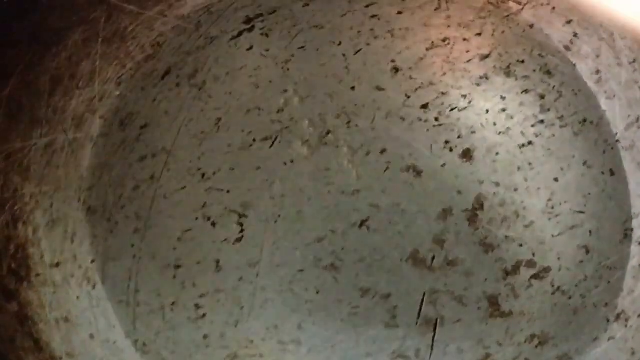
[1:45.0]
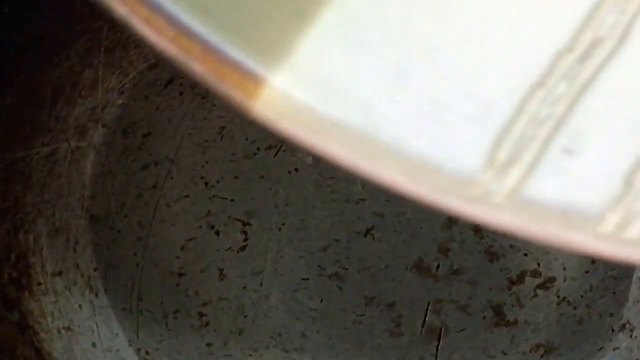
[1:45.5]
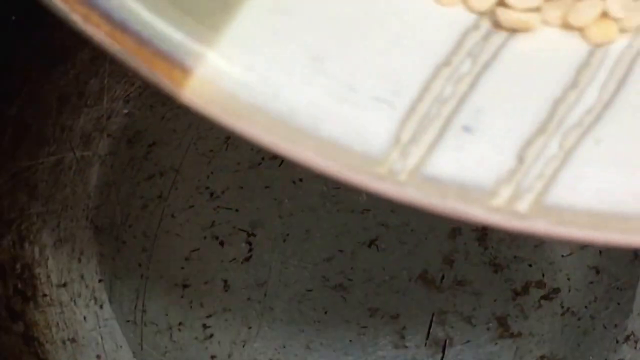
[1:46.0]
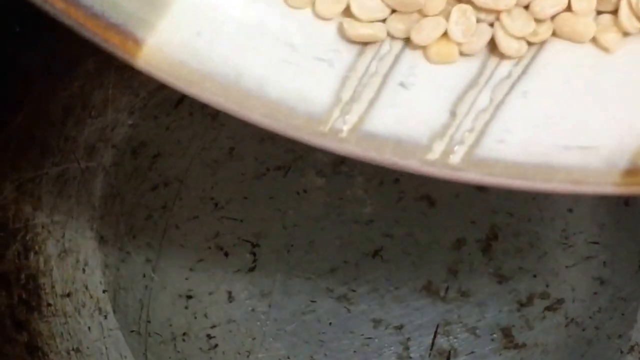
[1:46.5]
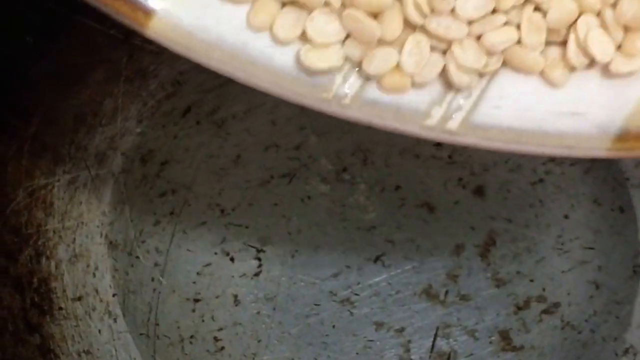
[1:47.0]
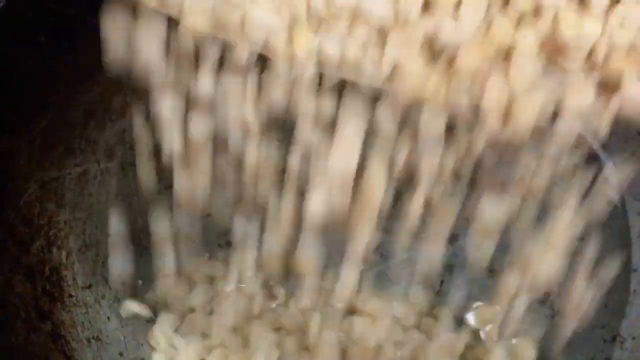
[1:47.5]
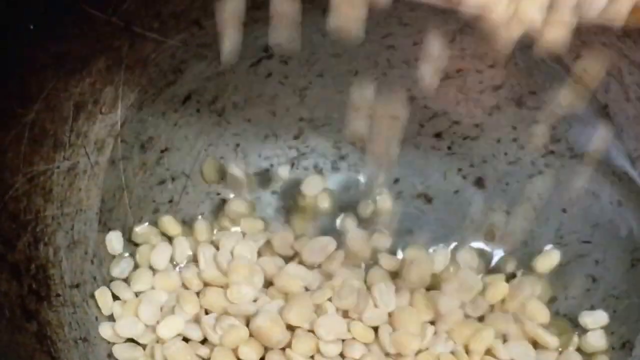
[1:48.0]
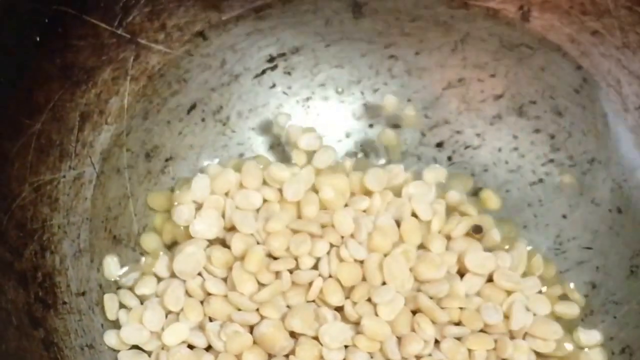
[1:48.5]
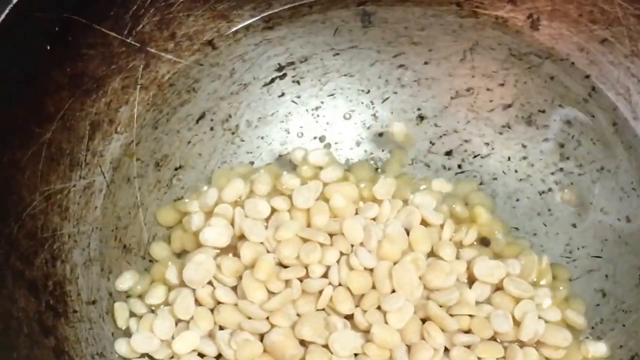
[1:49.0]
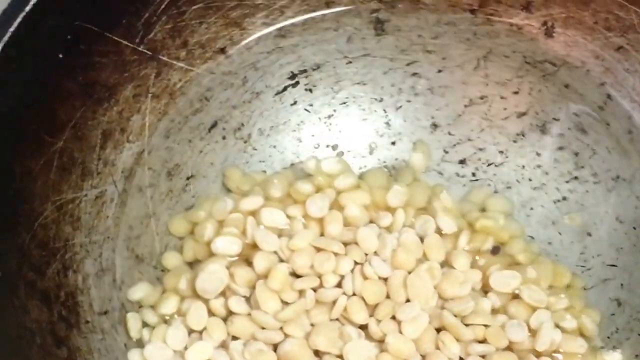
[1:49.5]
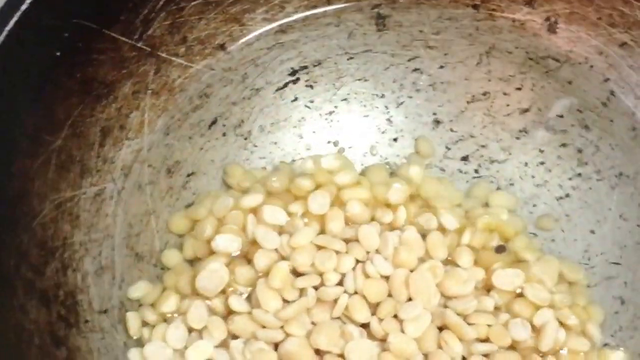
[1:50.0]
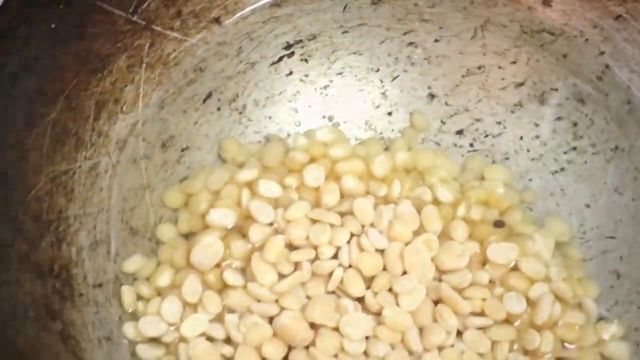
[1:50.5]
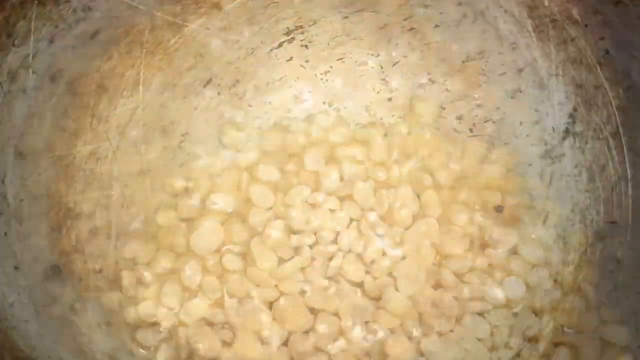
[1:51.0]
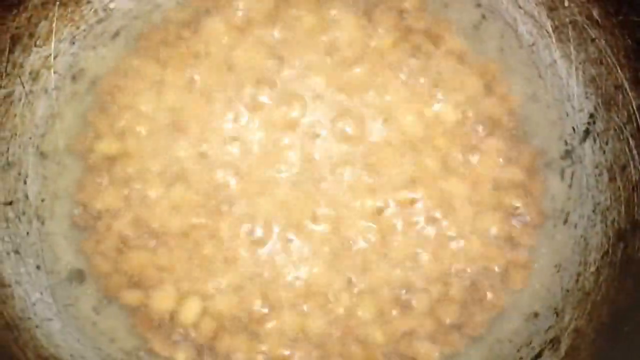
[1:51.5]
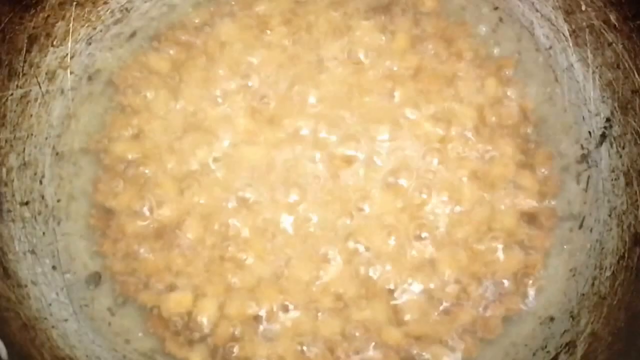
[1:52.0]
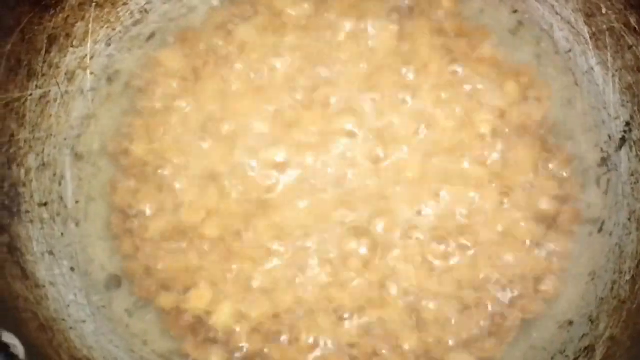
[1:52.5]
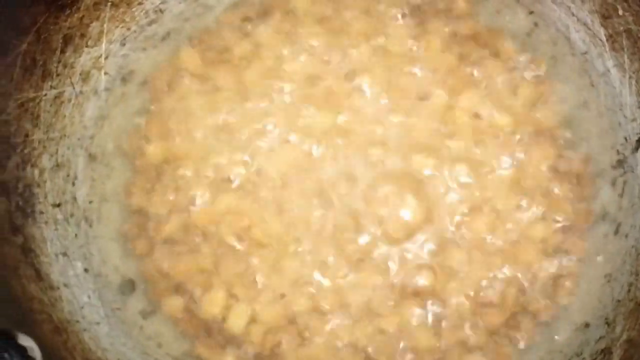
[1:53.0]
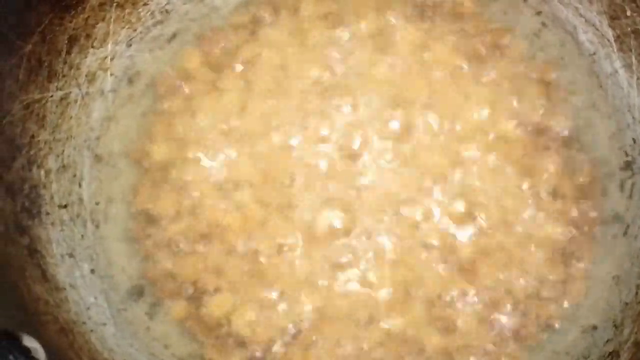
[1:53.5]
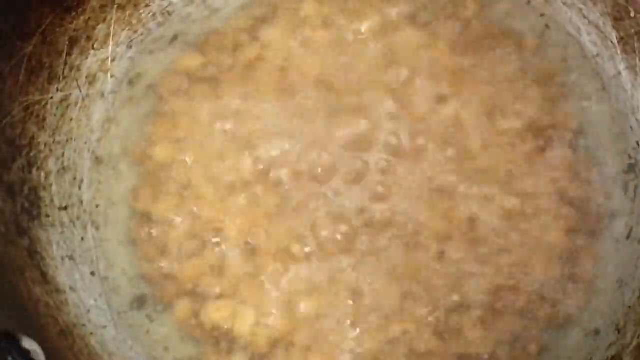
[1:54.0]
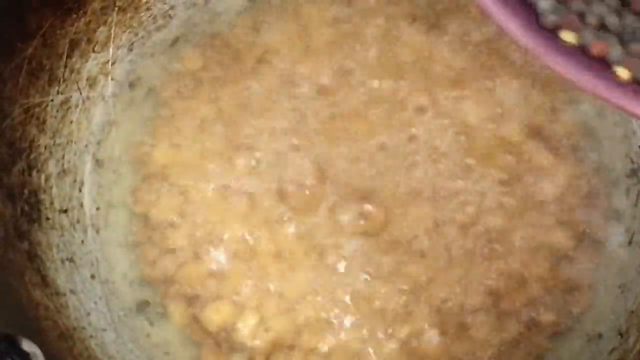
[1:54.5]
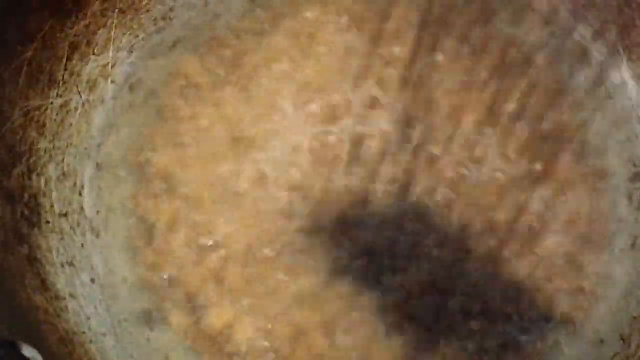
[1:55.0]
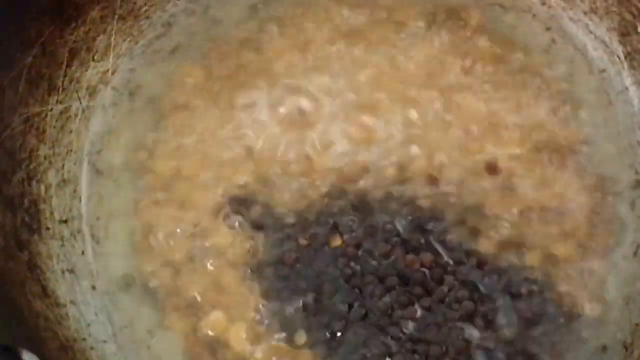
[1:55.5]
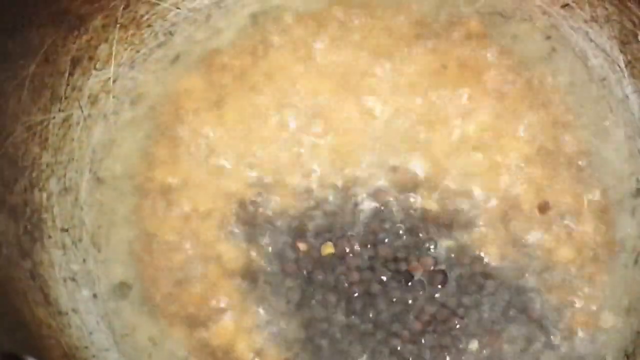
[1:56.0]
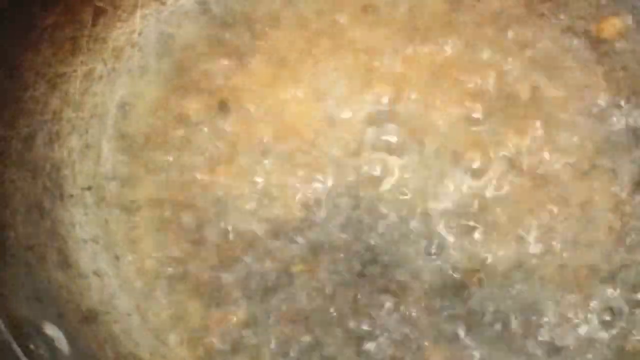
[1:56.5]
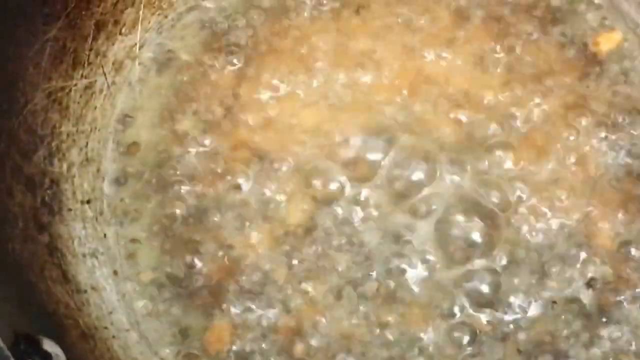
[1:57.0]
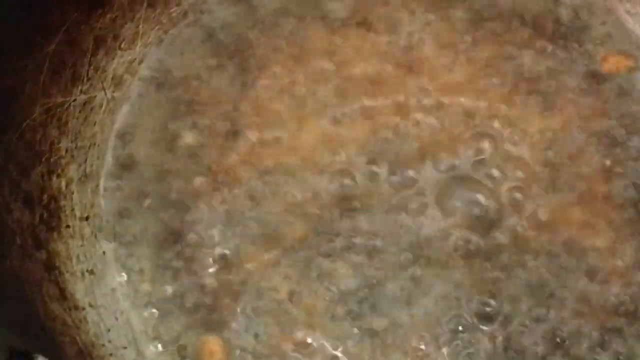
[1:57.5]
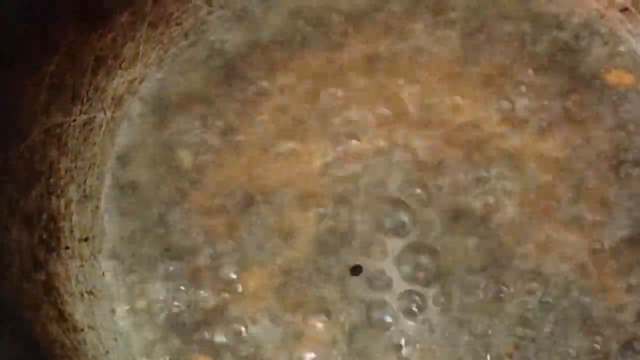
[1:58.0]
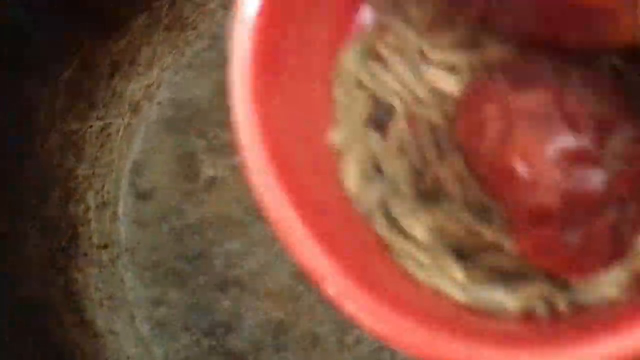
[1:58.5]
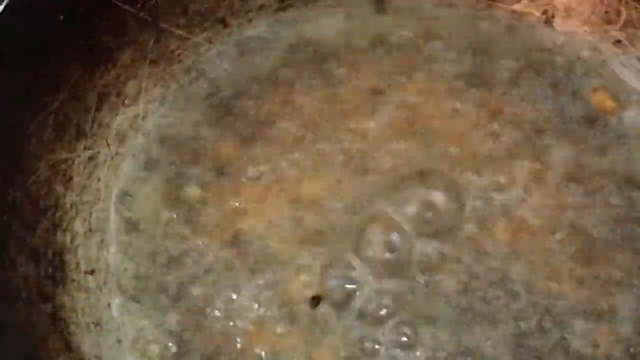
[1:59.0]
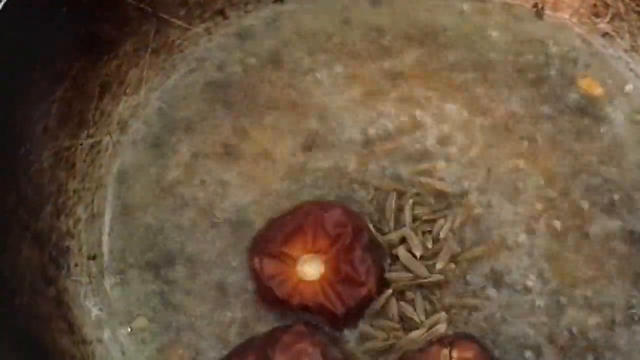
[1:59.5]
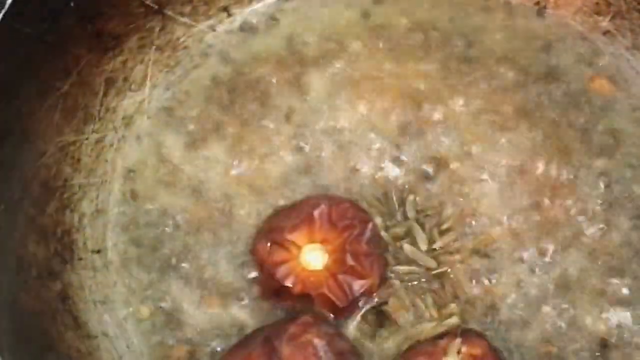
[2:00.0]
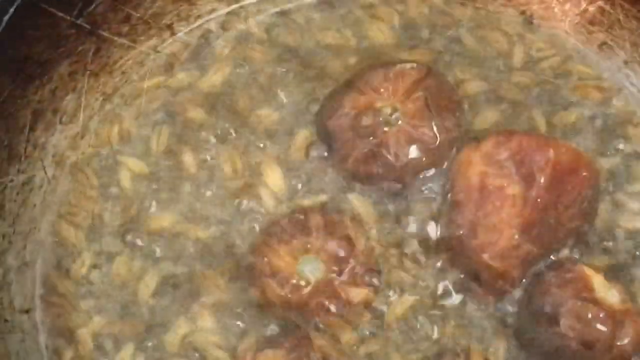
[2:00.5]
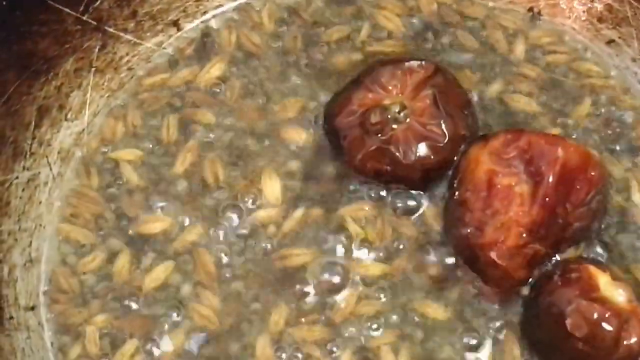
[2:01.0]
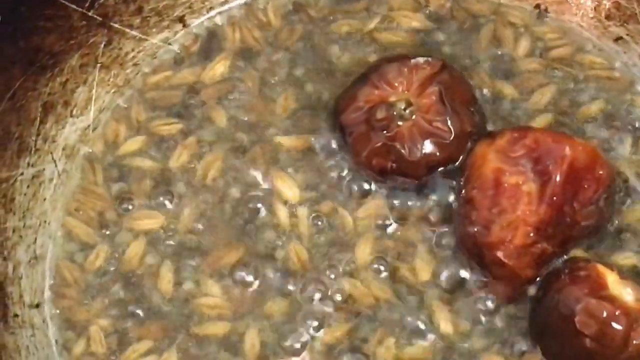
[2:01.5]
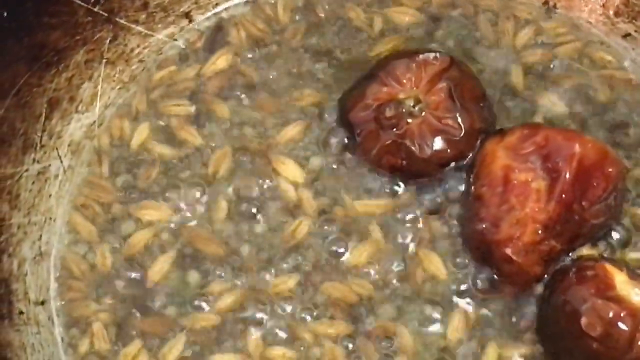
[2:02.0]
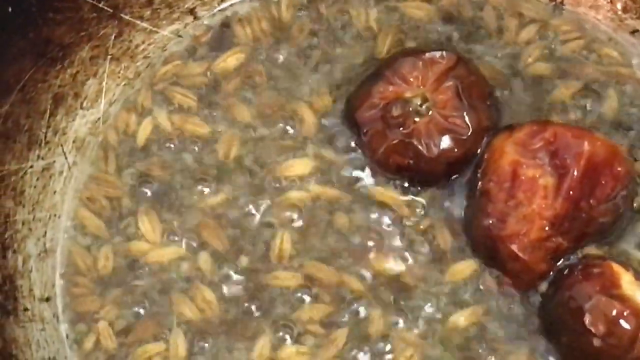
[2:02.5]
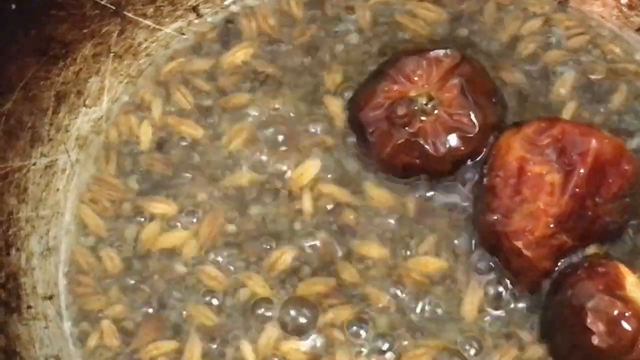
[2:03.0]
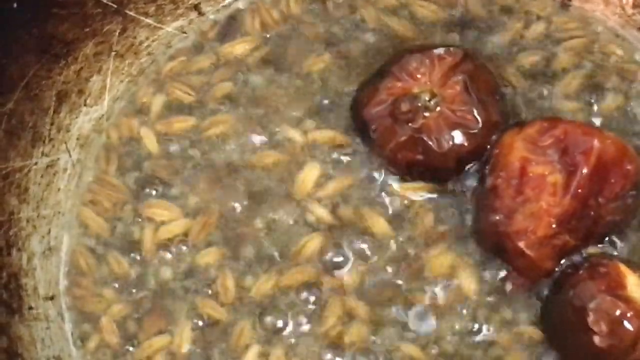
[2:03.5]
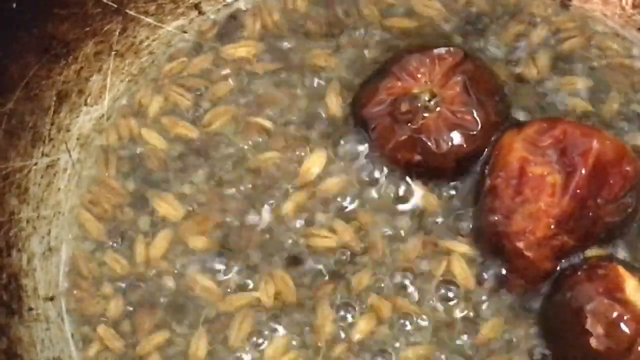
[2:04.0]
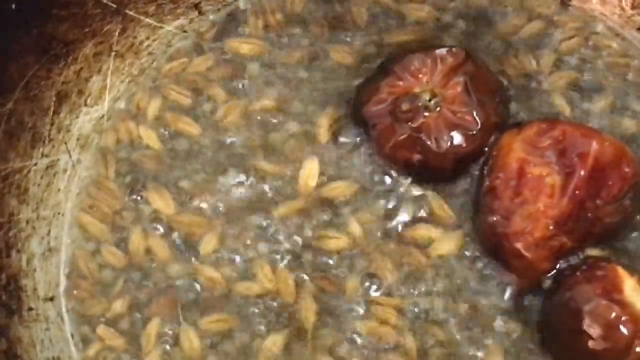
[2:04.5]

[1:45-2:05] What appear to be dried lentils are being boiled, including some sort of black one, possibly a black lentil or small black bean, along with some round dried ingredients that could possibly be a pepper of some sort. It all appears to be boiled together.